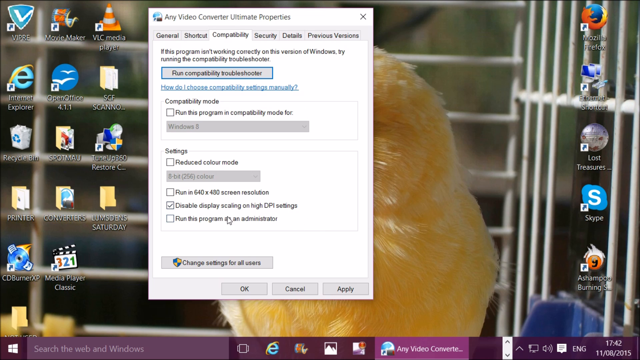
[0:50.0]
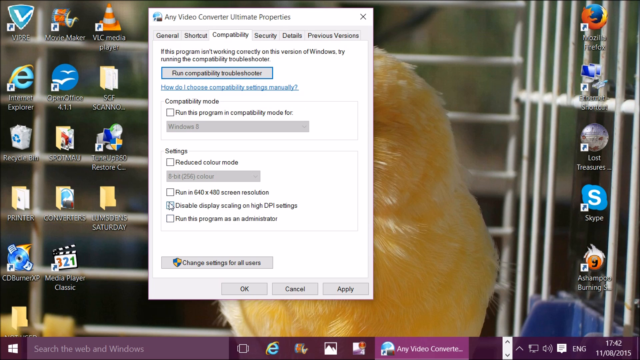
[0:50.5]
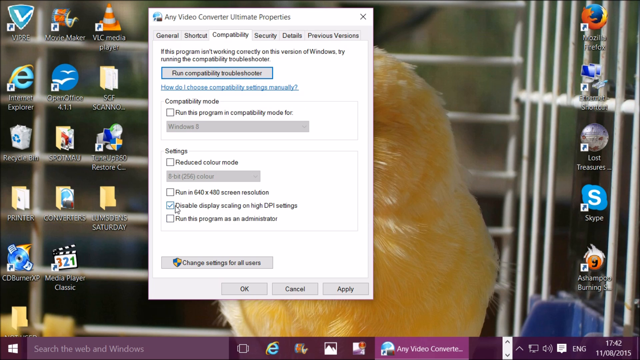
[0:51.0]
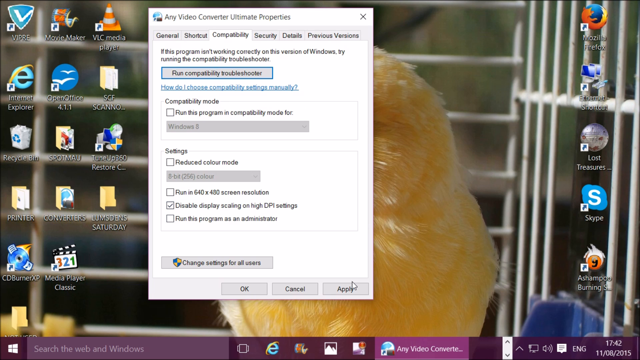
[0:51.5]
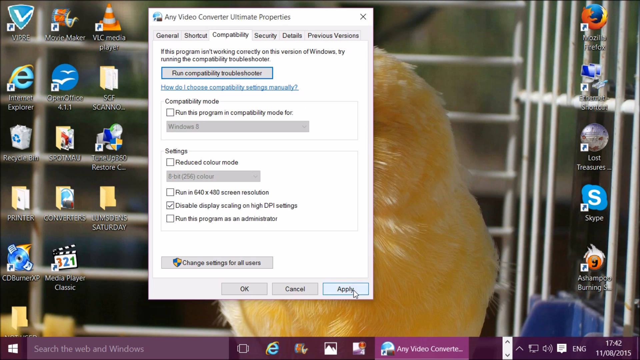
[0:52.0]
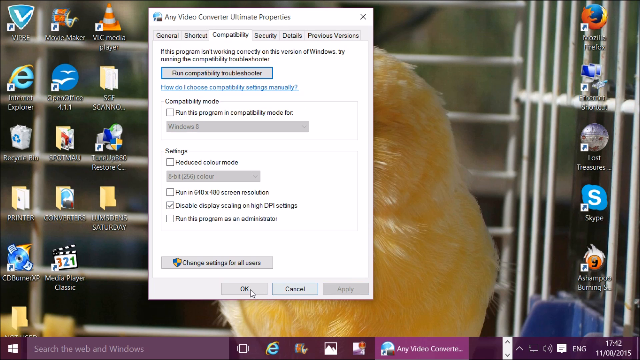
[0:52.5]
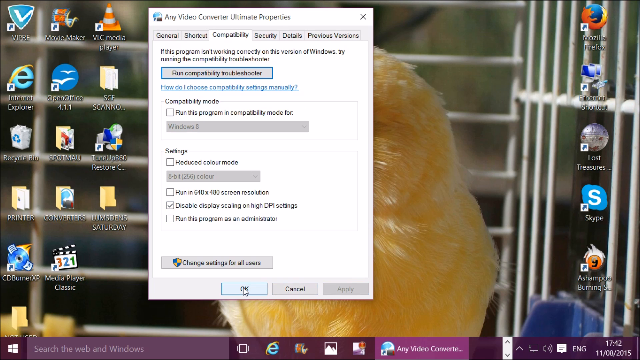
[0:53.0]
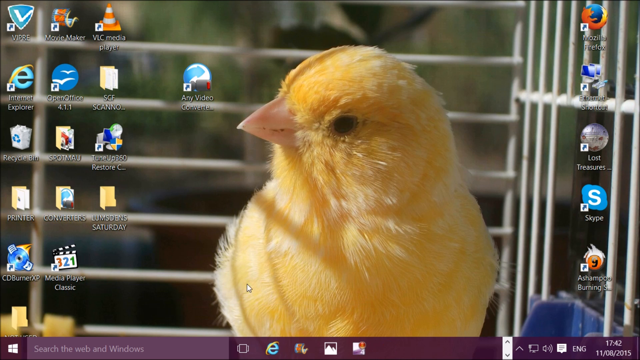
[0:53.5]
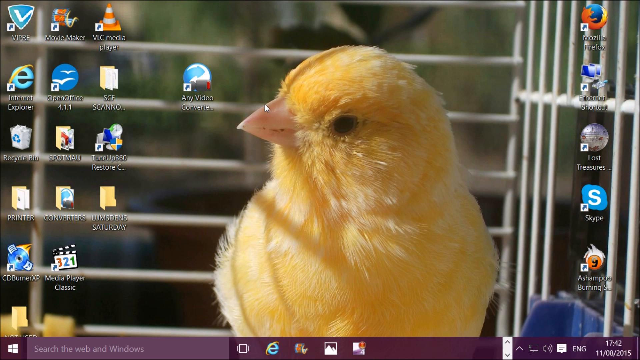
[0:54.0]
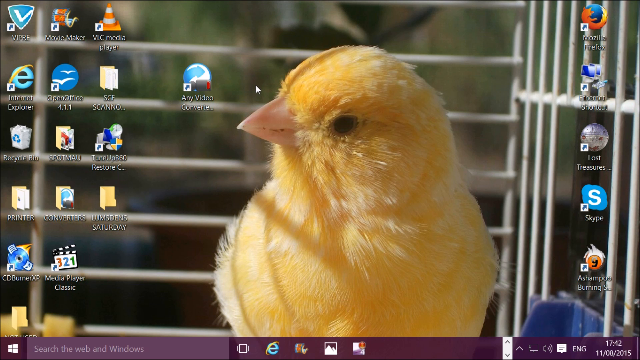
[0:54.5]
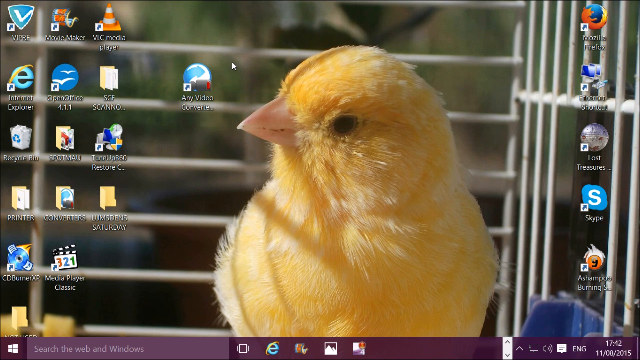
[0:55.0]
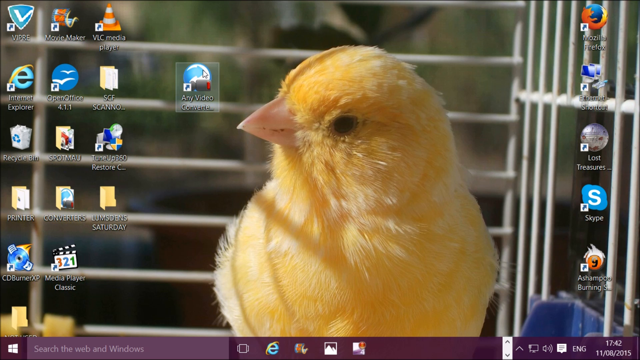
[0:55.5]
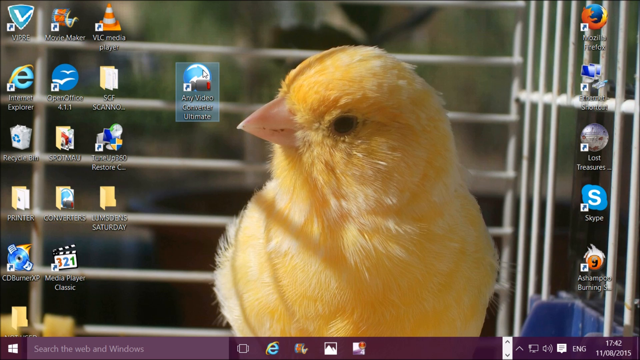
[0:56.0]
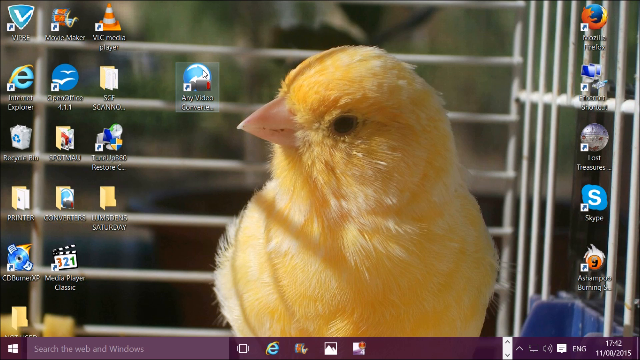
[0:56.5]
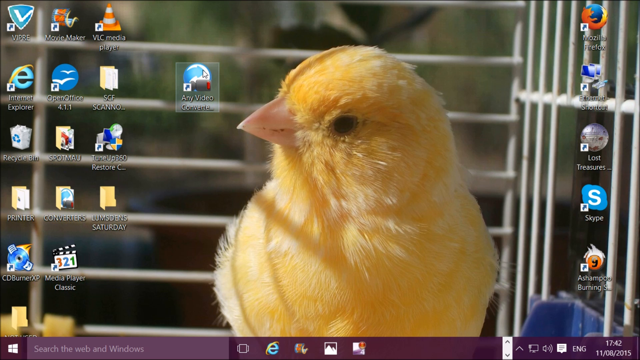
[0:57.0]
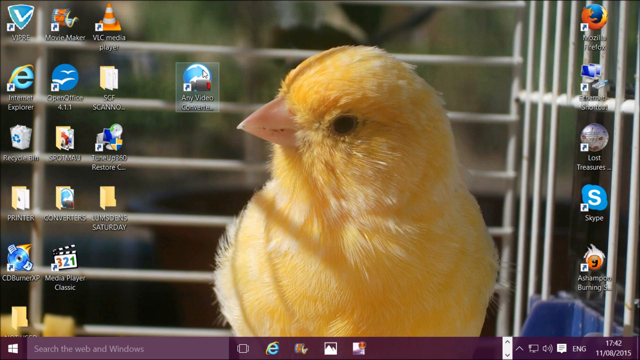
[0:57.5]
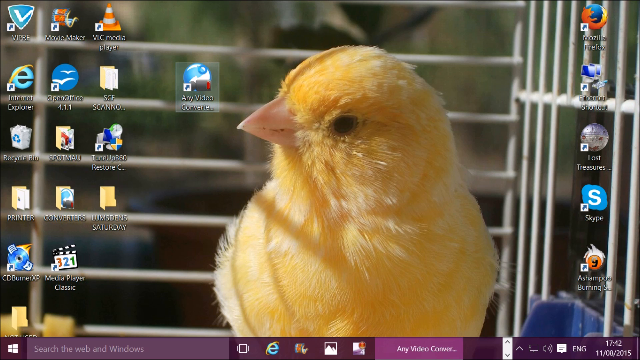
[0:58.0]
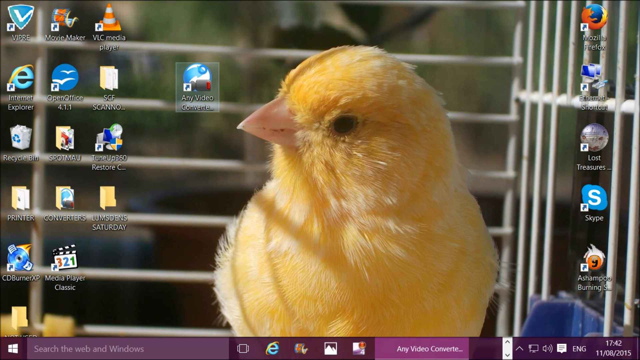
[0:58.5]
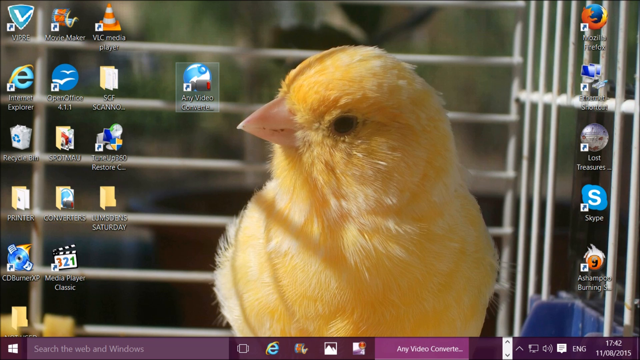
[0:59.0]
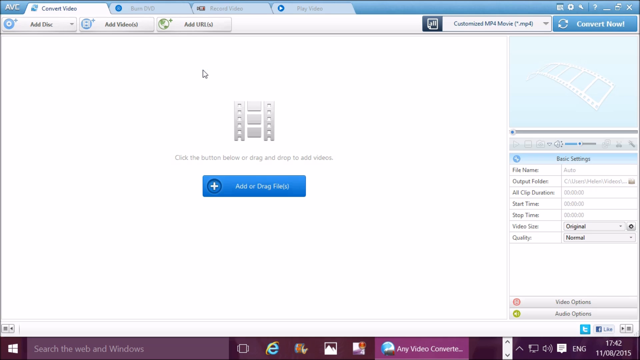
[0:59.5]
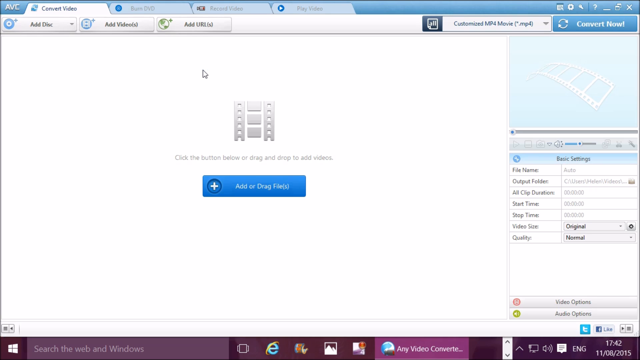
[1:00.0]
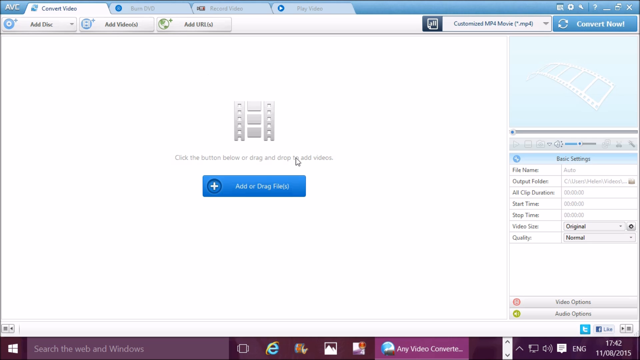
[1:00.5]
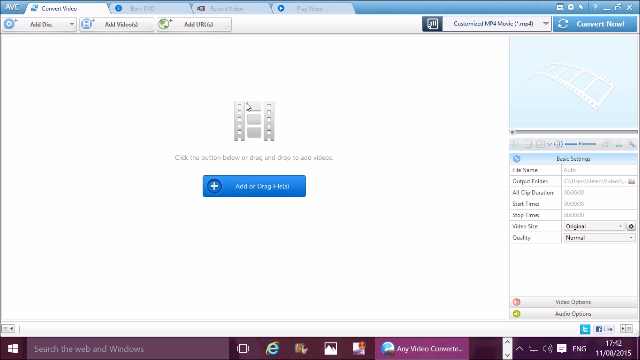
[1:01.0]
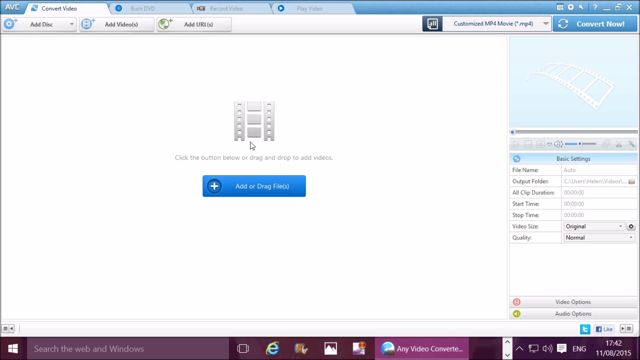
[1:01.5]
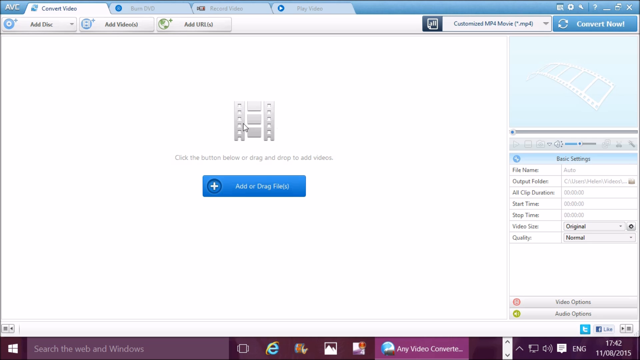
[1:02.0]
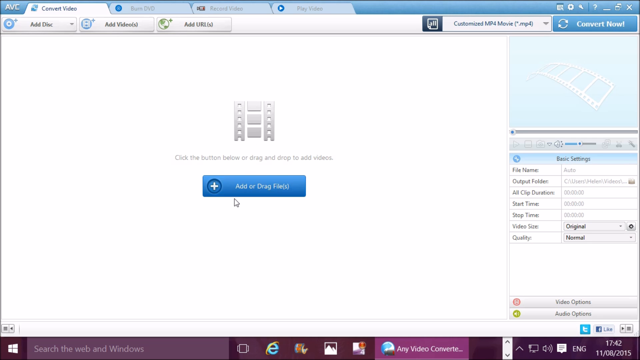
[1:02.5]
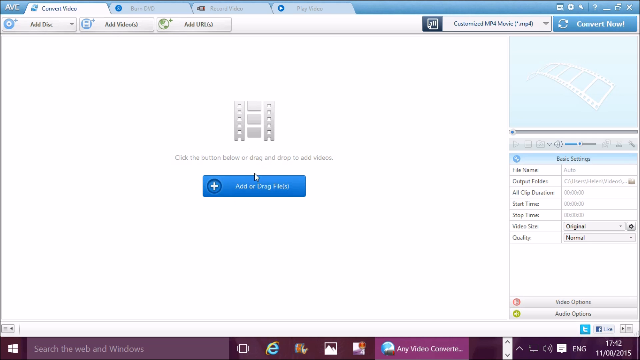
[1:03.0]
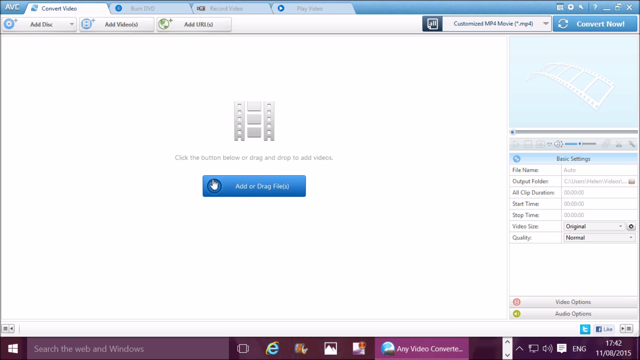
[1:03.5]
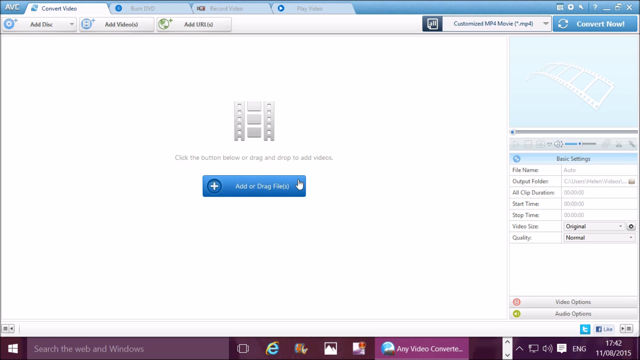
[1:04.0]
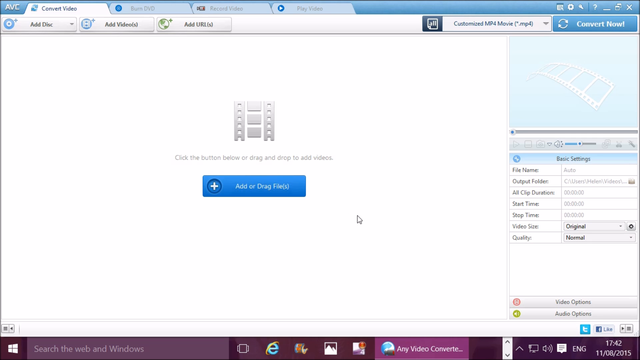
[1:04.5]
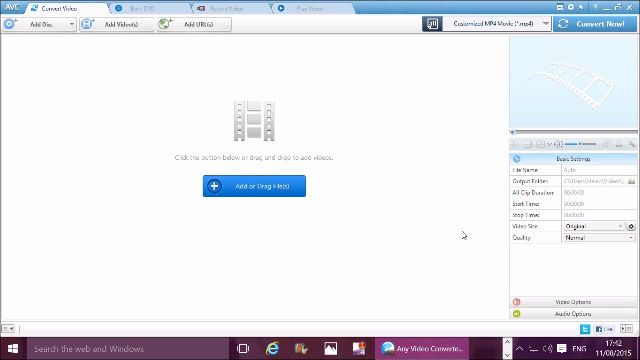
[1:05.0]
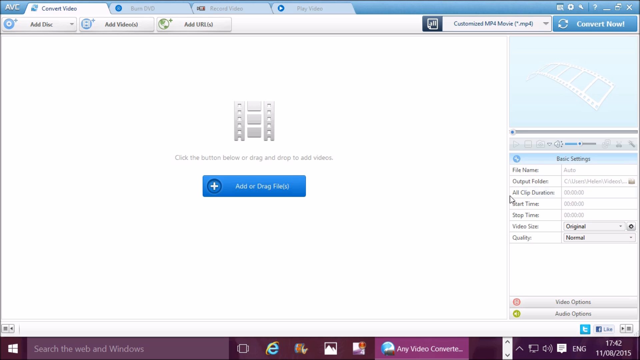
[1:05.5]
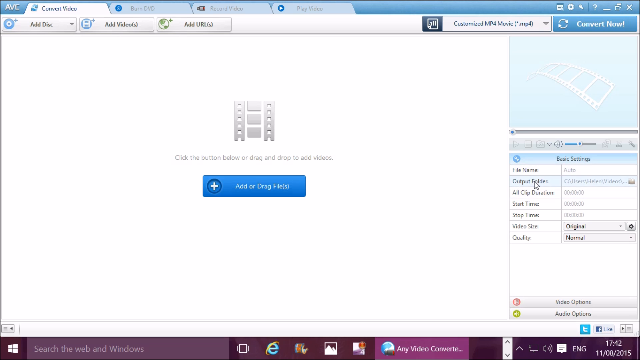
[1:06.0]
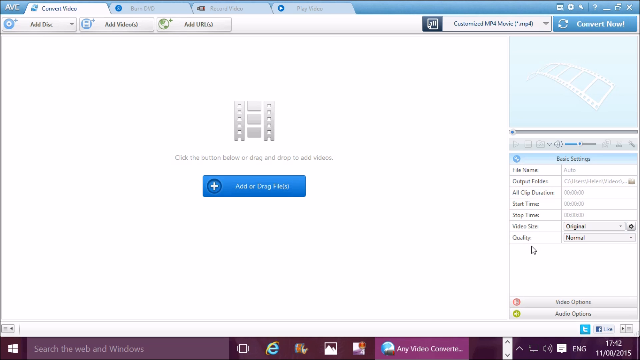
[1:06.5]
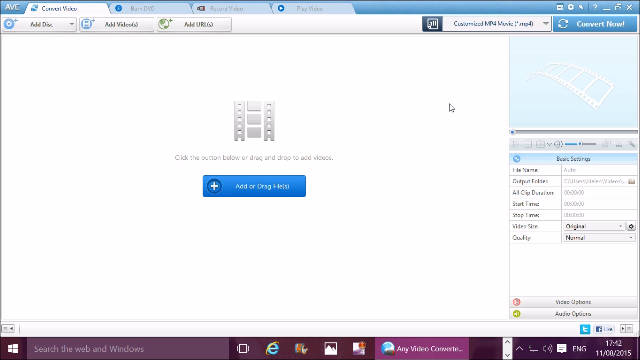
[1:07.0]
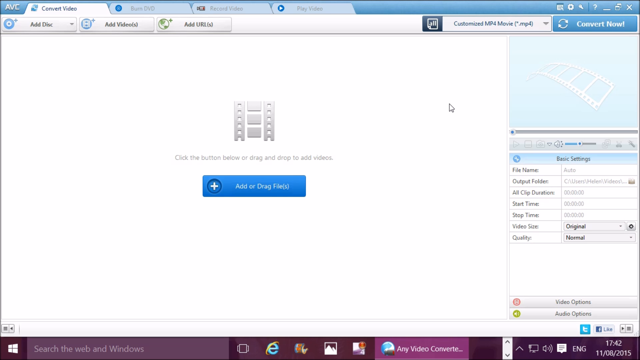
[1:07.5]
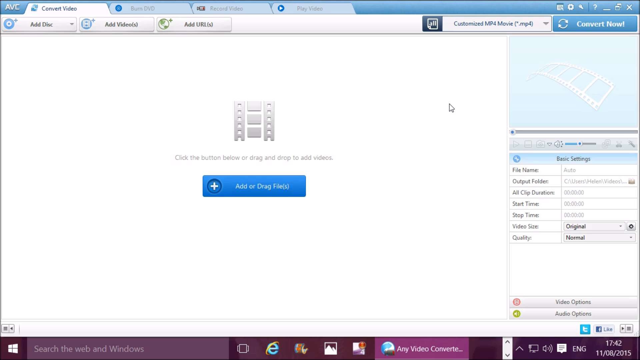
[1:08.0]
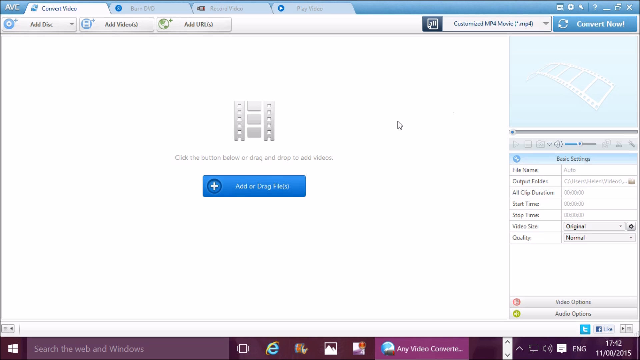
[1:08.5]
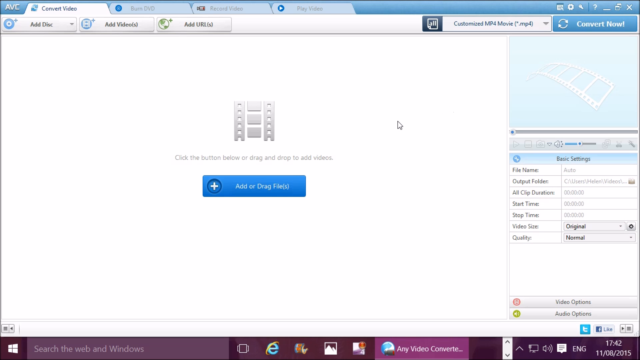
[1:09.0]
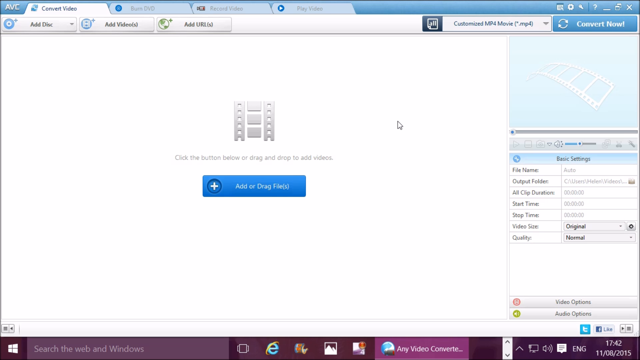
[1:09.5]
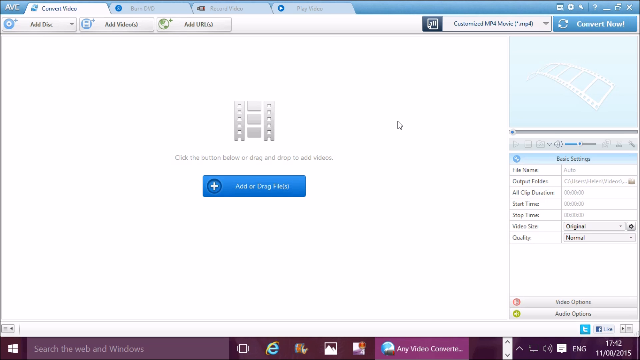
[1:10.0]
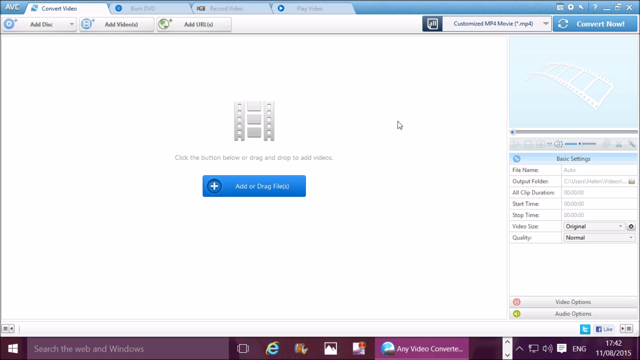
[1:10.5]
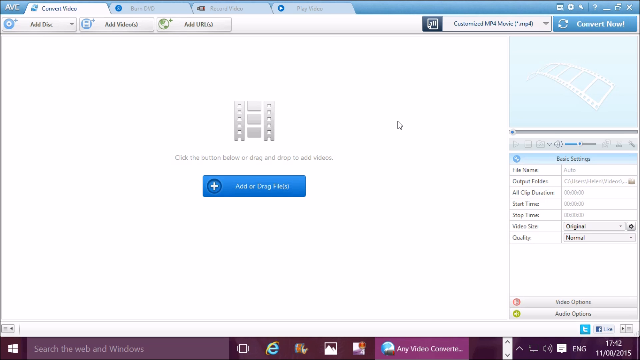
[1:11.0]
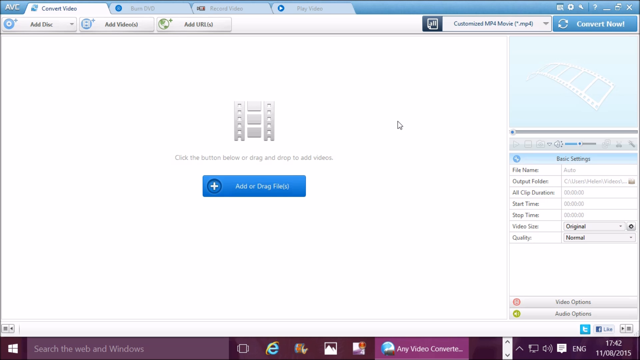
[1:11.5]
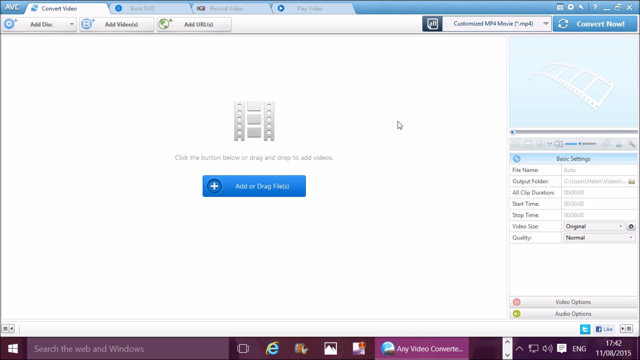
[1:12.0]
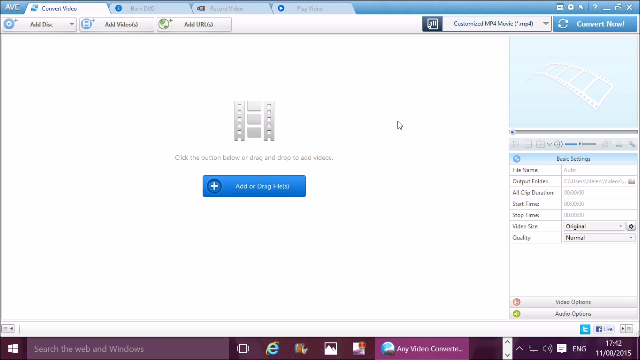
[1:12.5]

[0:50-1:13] The person tries to open the video converter file and points to the add or drag file options. The video then comes to an end.